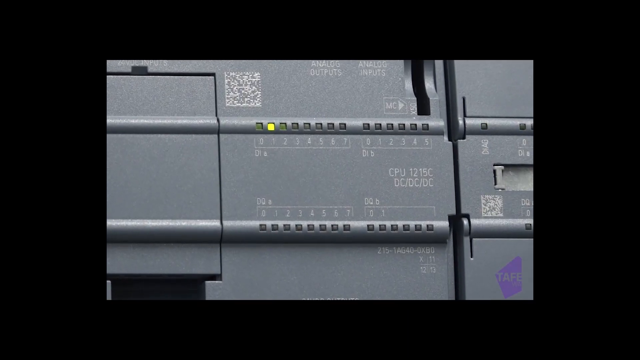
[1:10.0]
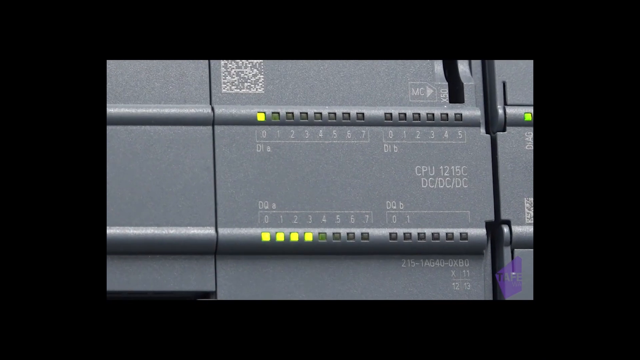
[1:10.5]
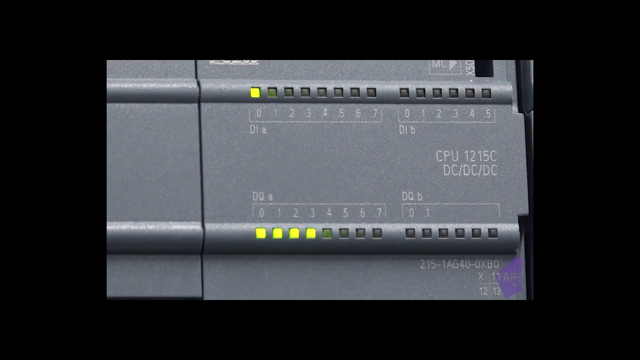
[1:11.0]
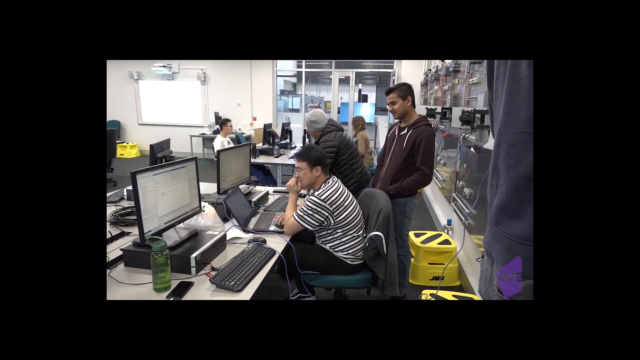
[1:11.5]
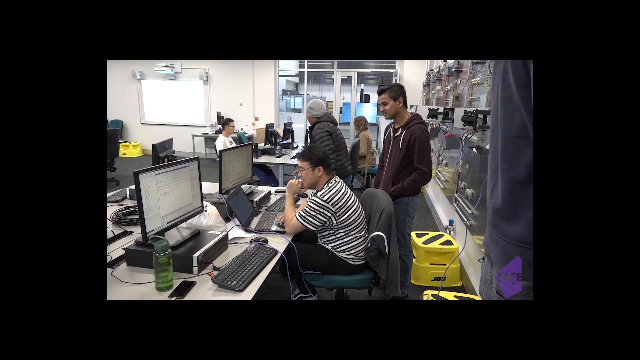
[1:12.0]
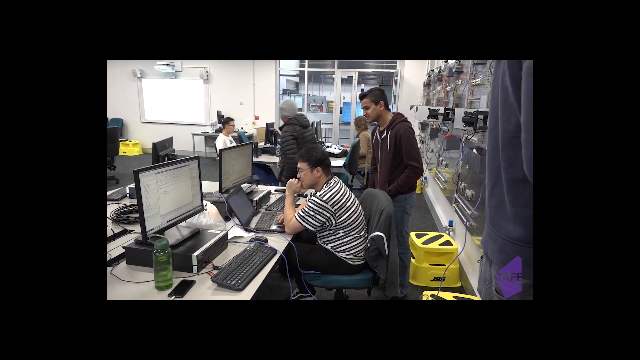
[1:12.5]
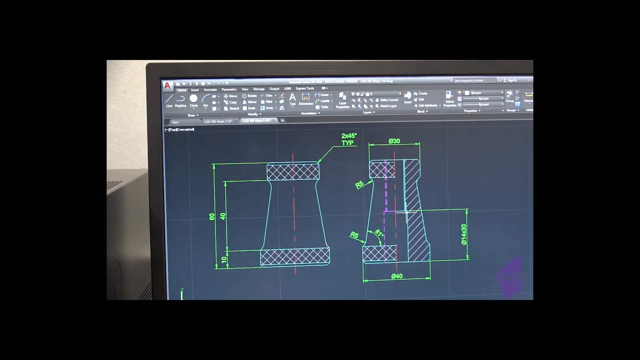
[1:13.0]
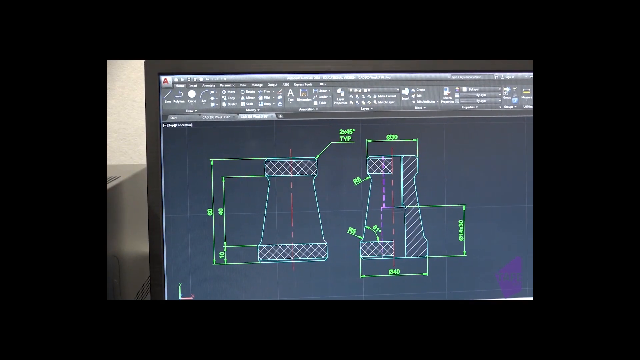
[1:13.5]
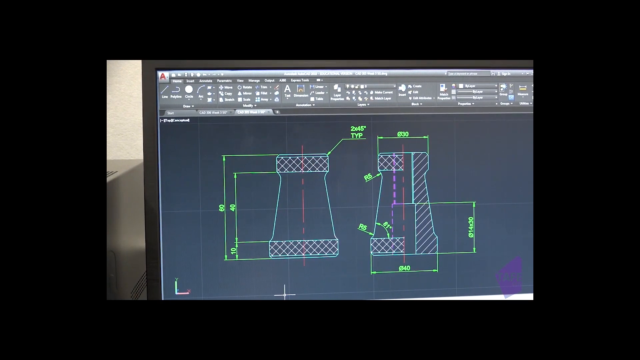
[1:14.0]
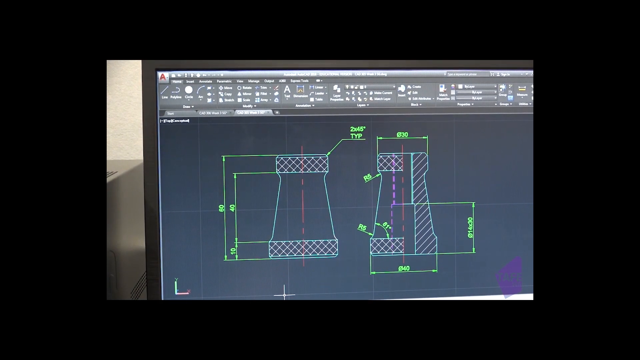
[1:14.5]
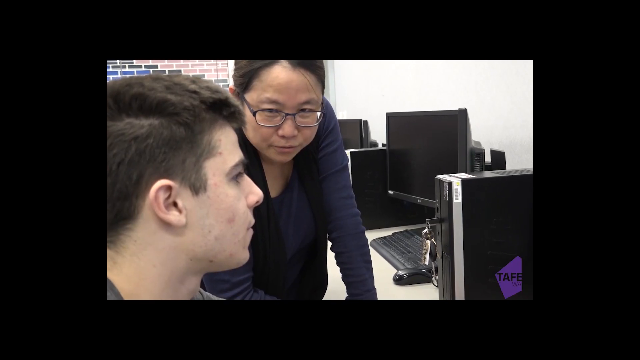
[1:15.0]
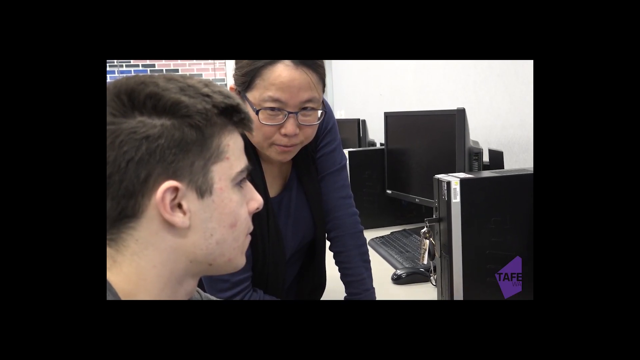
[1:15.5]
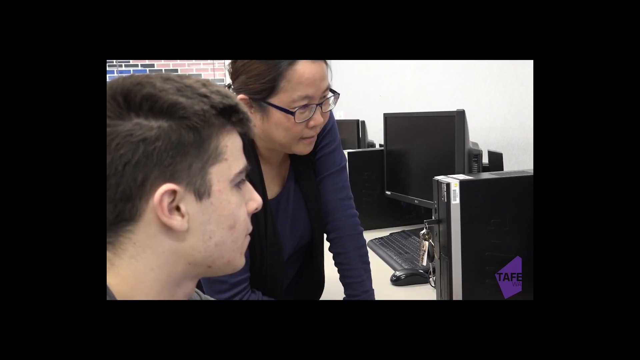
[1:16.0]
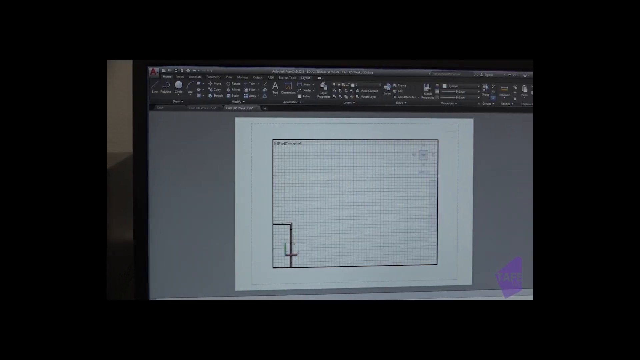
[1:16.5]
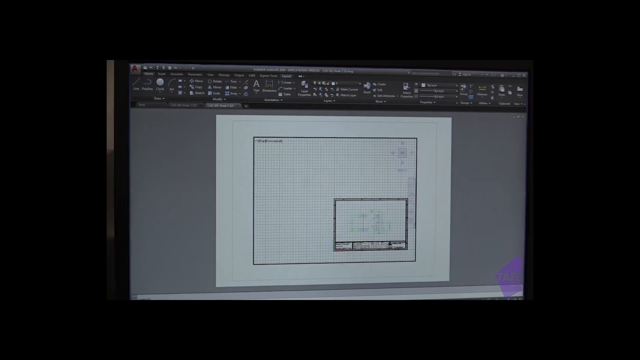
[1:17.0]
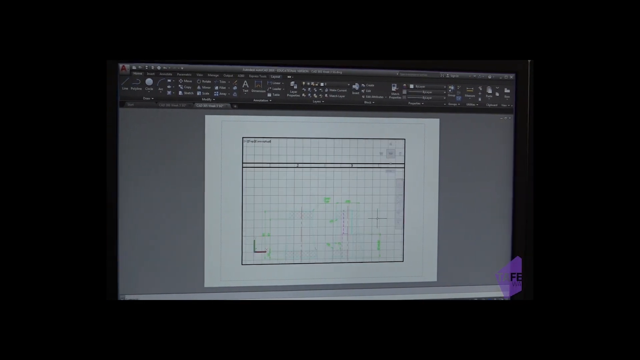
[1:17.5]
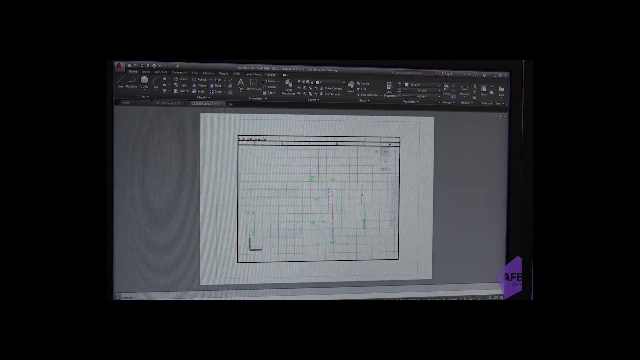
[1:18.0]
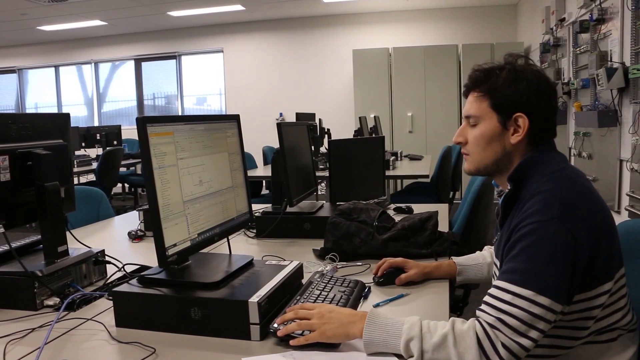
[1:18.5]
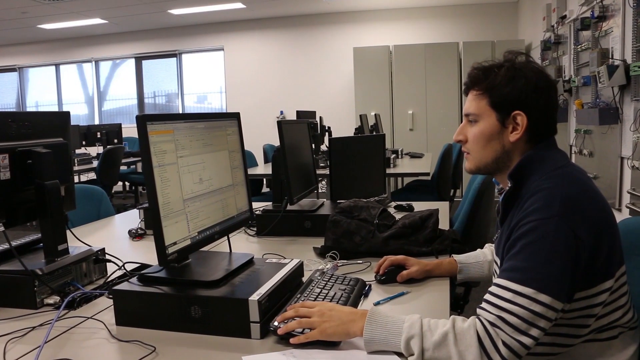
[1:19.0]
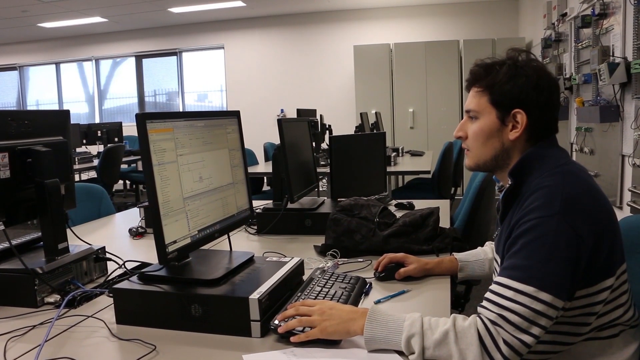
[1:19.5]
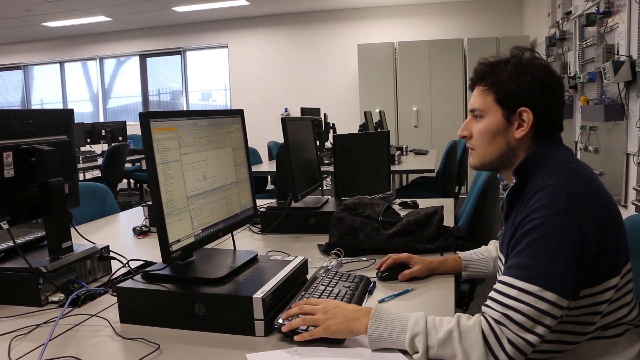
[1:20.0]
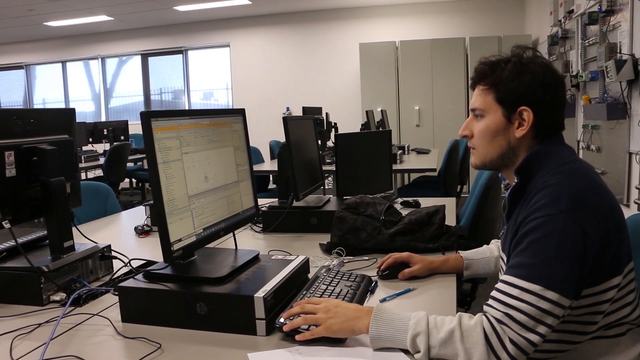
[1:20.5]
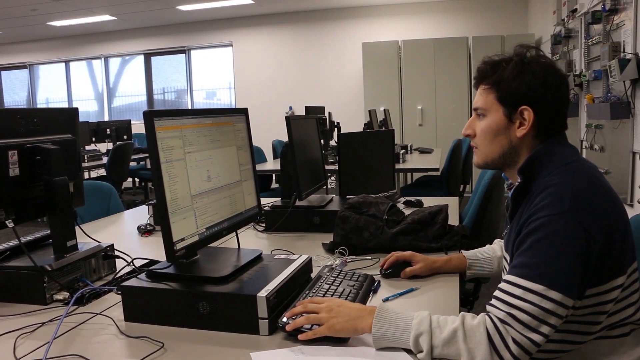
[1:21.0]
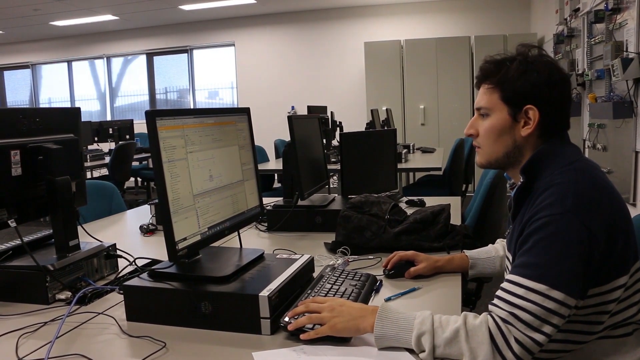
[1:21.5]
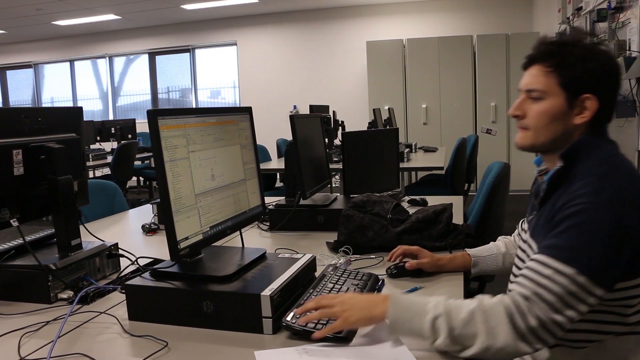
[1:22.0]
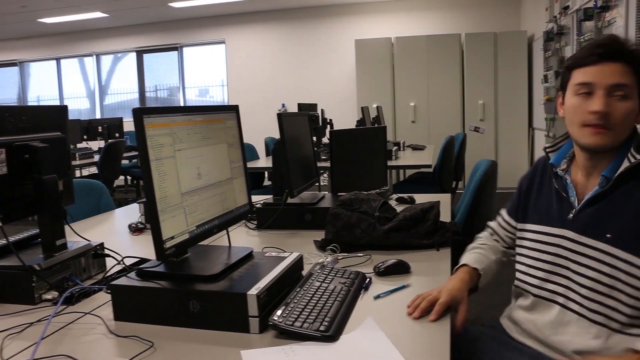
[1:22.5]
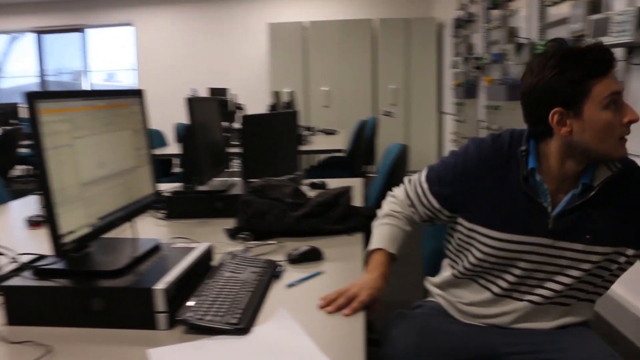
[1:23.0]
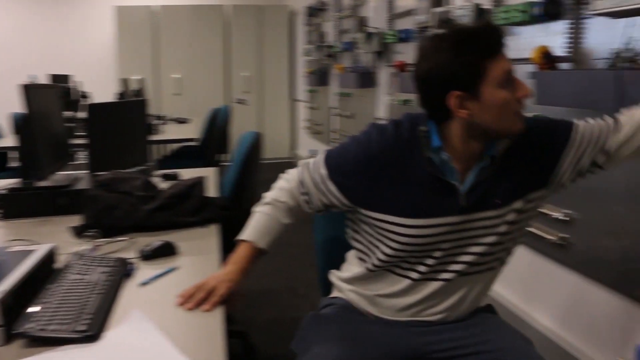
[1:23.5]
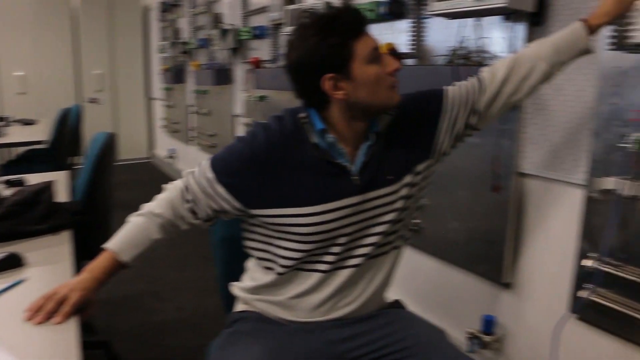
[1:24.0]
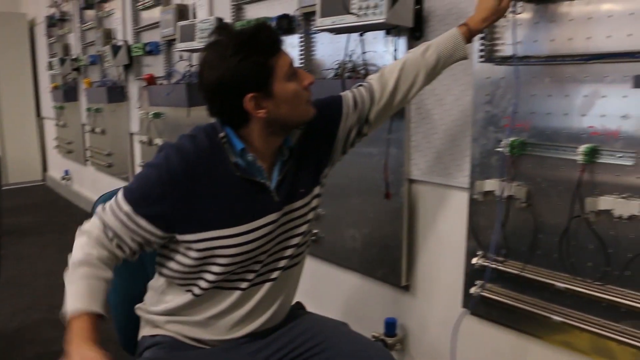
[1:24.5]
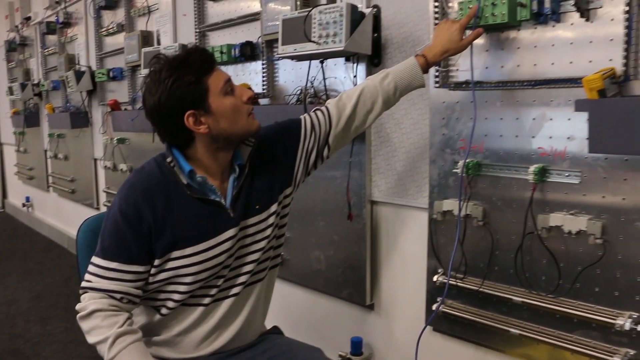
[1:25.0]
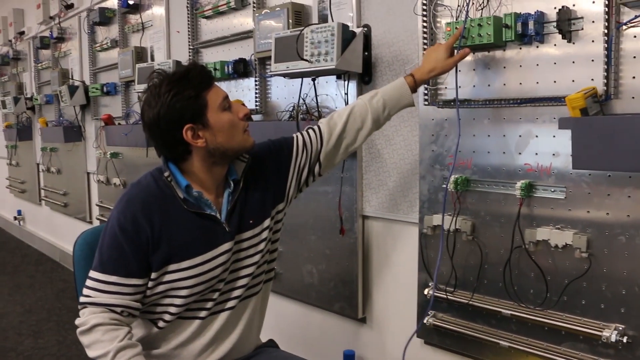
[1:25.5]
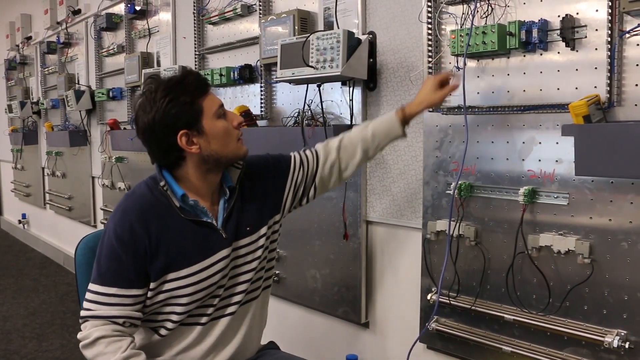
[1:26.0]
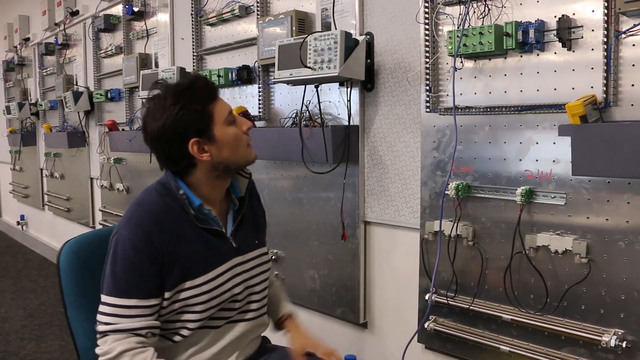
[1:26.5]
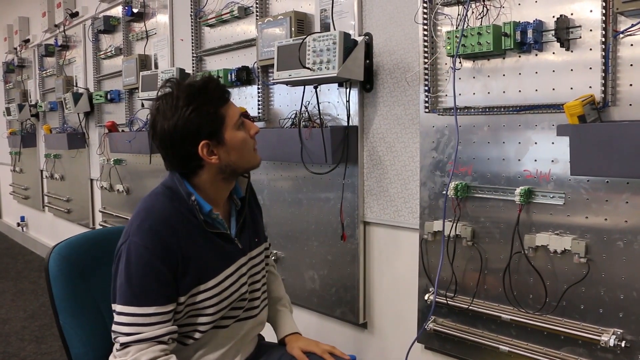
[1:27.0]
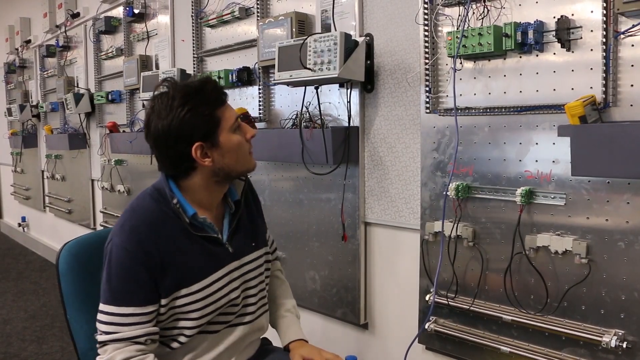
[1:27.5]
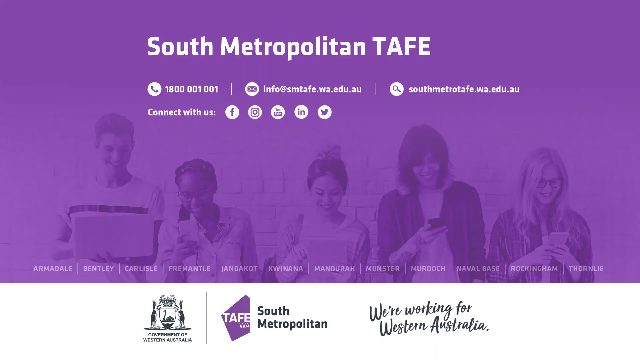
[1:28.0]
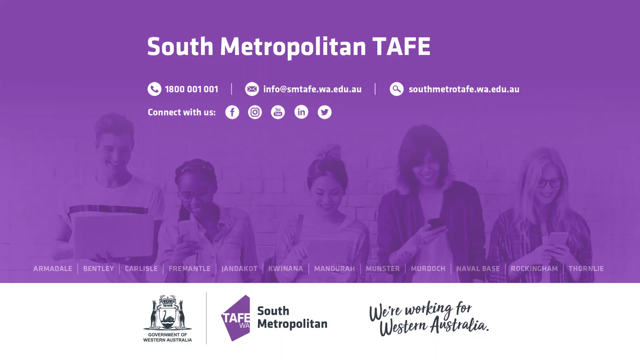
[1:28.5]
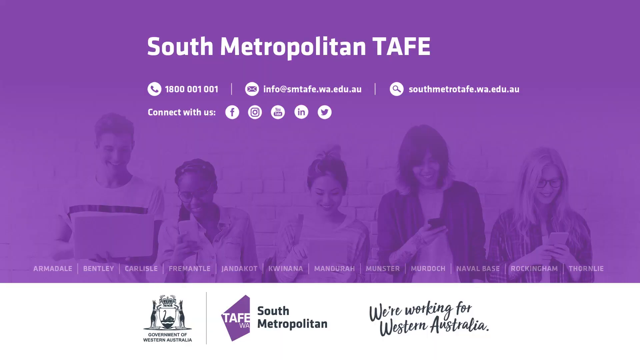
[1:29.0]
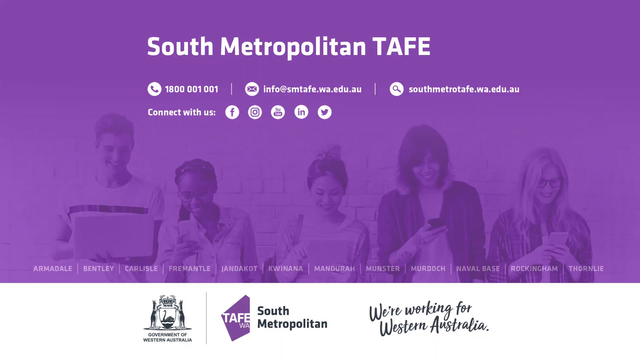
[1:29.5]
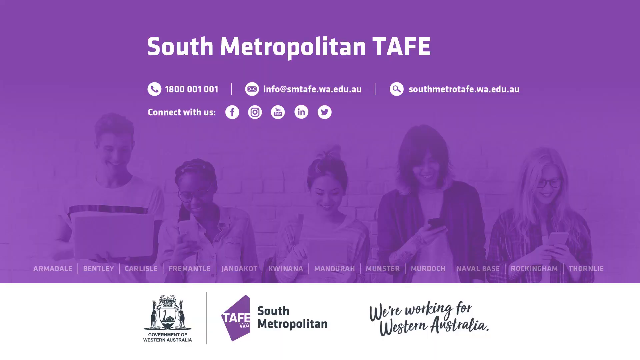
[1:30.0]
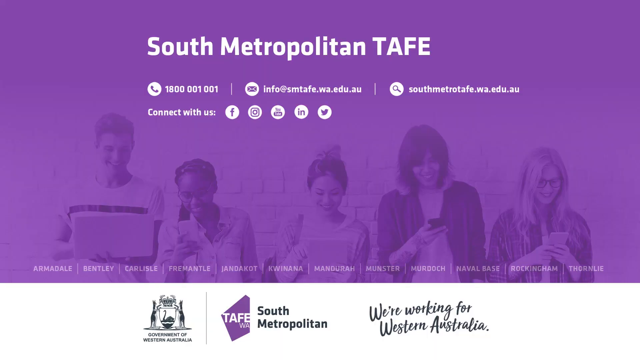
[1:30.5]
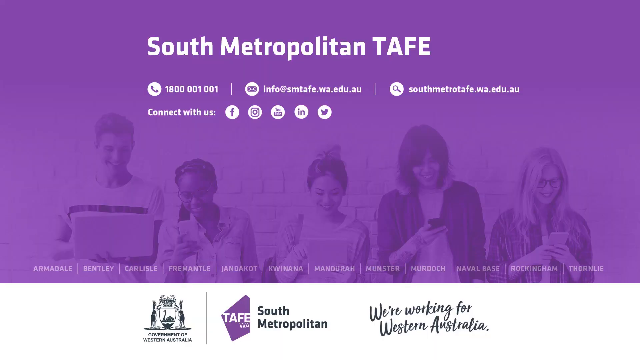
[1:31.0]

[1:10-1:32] The video moves to a different screen and shows three different labs with people of different nationalities; some sit at computers and work on boxes with wiring. "South Metropolitan TAFE" appears on a violet-purple screen. The first lab has five people. The second shows a white man and an Oriental woman with glasses right next to each other, talking. In the next lab, a man who looks Arab, wearing a long-sleeved, rugby-looking shirt, is by himself; he uses his mouse, turns around and works on wiring going into the boxes. "South Metropolitan TAFE" appears again. Some people wear T-shirts, others long sleeves and coats. Gray boxes with yellow lights are shown, and one man wears a winter coat with a beanie. Graphics keep appearing on the screen.